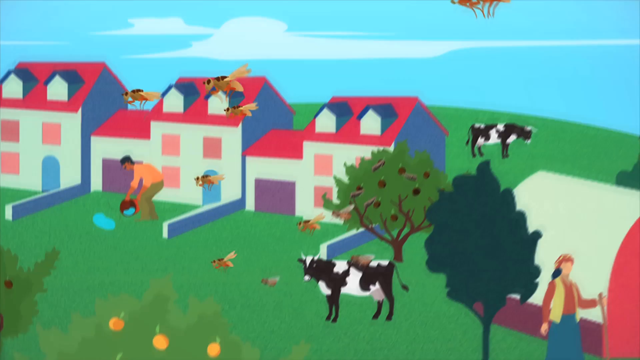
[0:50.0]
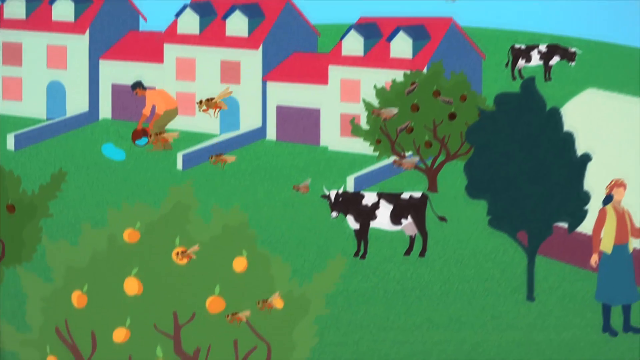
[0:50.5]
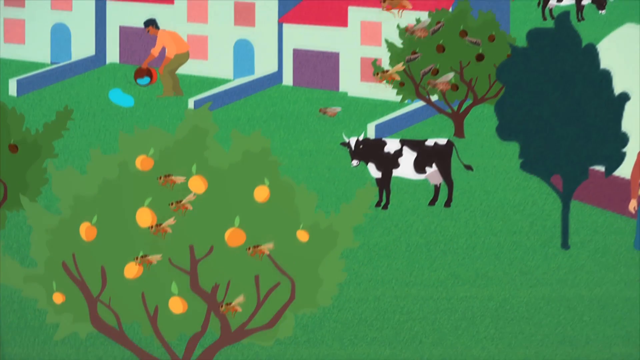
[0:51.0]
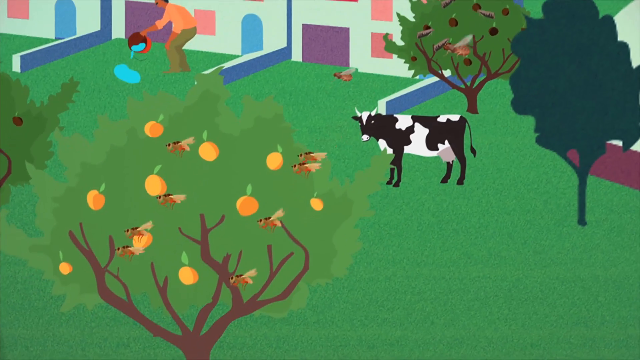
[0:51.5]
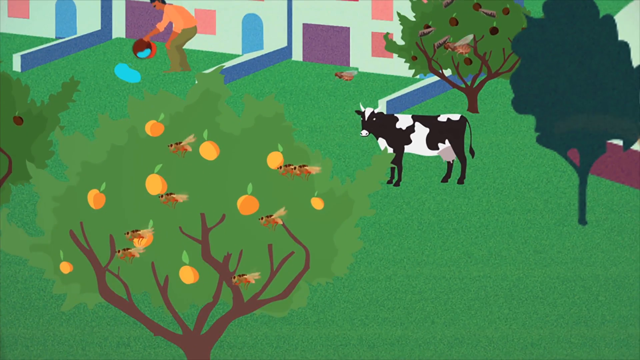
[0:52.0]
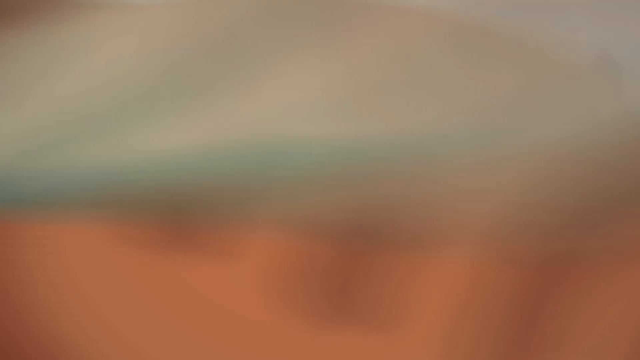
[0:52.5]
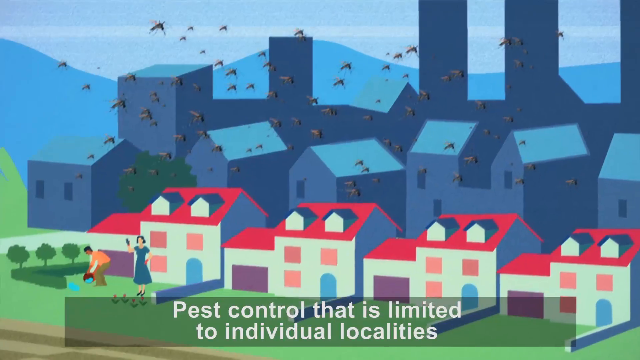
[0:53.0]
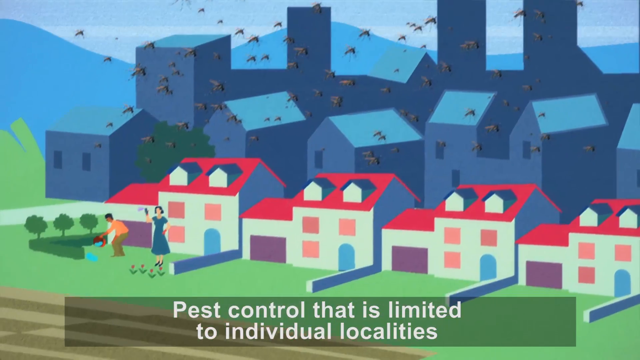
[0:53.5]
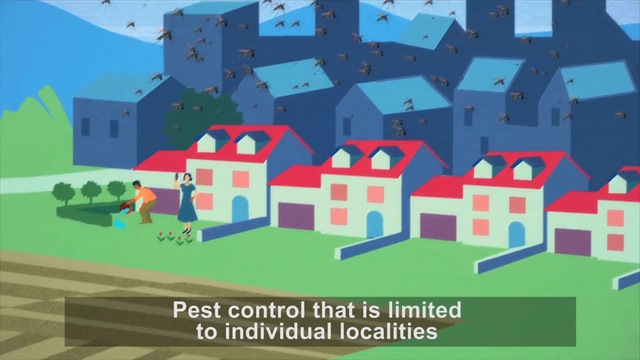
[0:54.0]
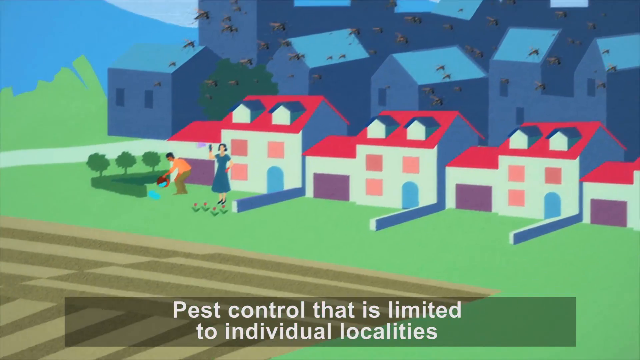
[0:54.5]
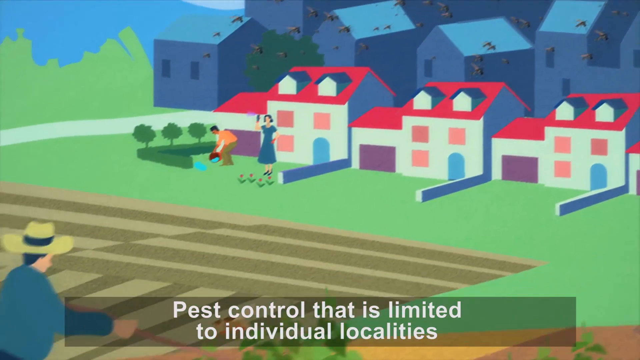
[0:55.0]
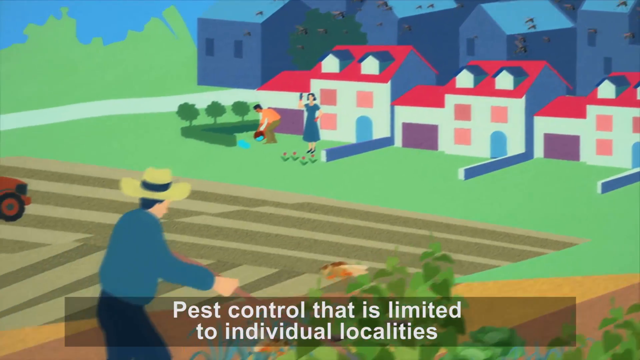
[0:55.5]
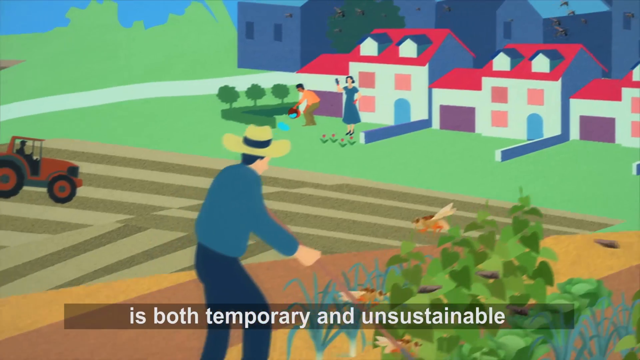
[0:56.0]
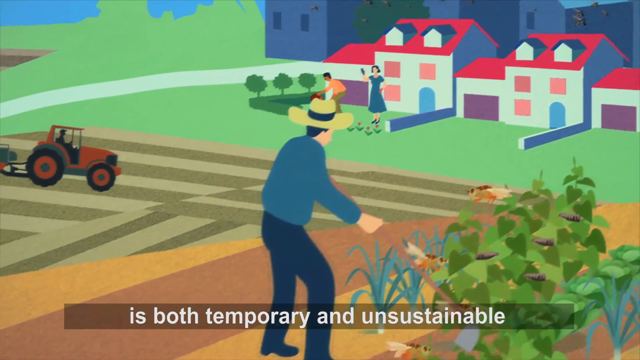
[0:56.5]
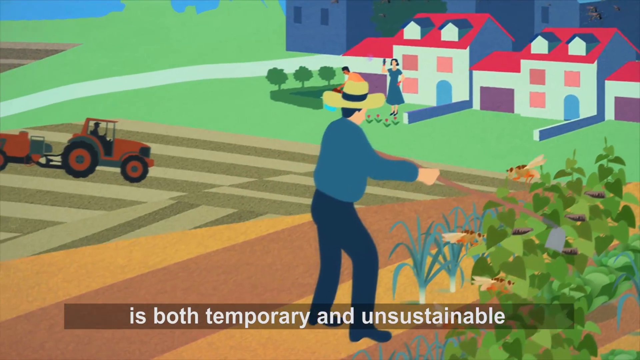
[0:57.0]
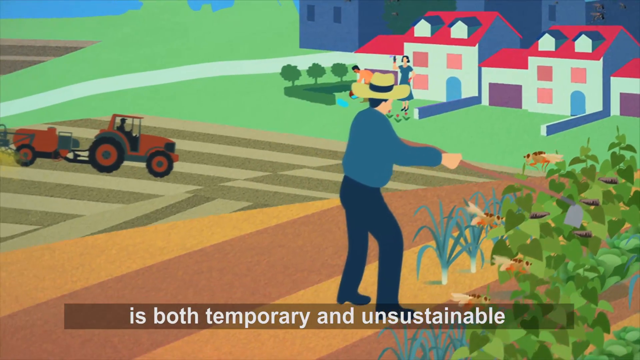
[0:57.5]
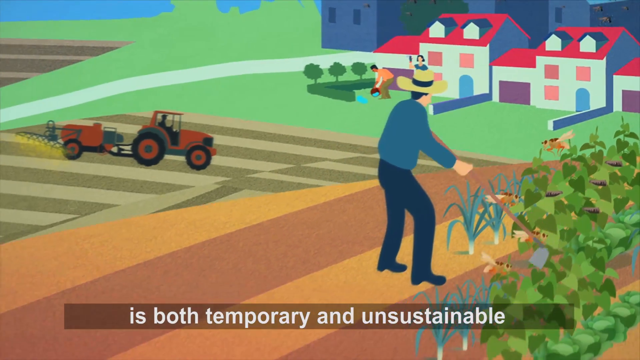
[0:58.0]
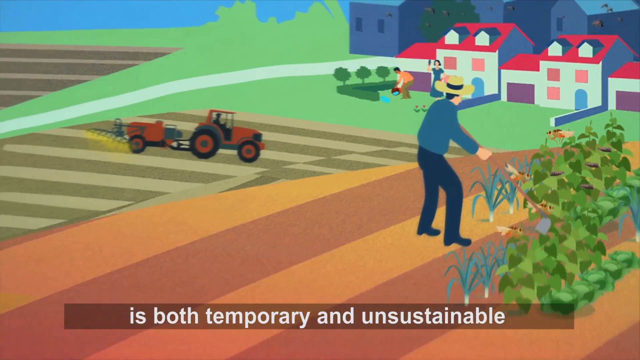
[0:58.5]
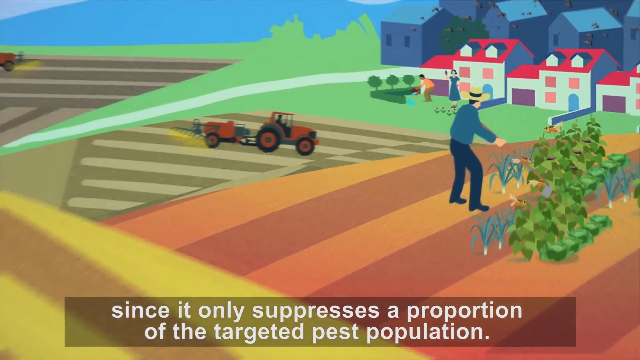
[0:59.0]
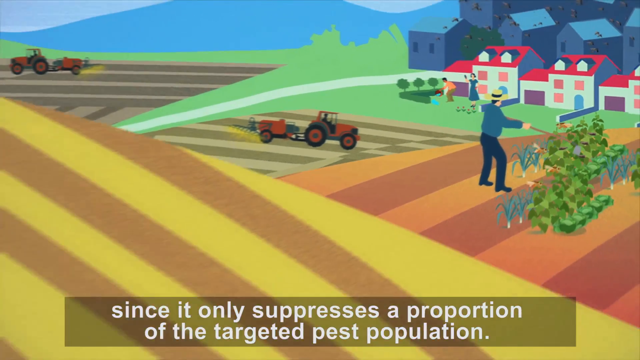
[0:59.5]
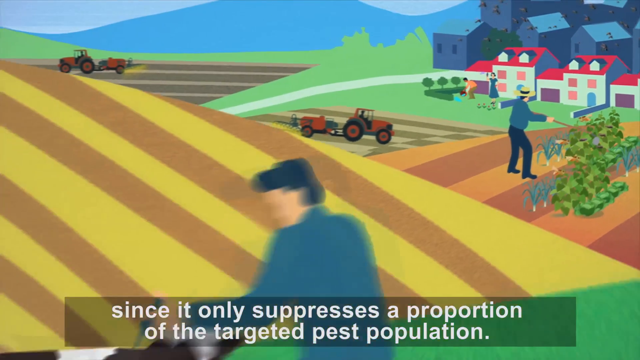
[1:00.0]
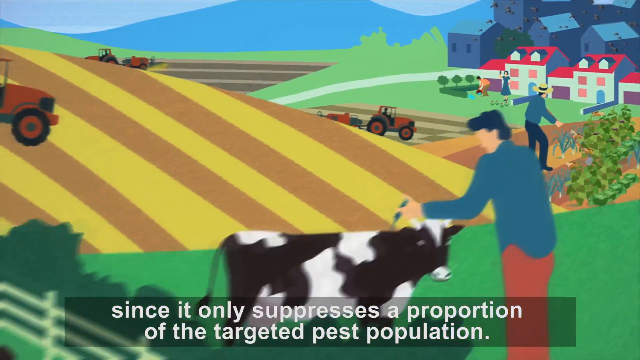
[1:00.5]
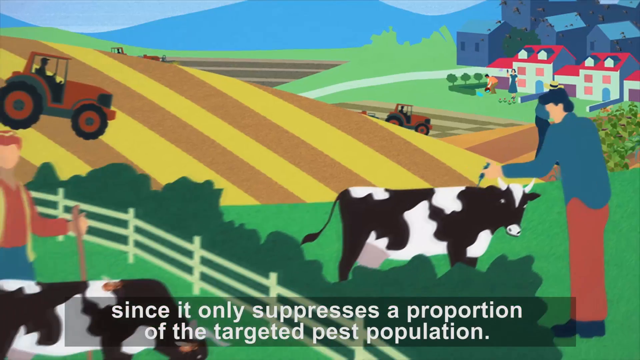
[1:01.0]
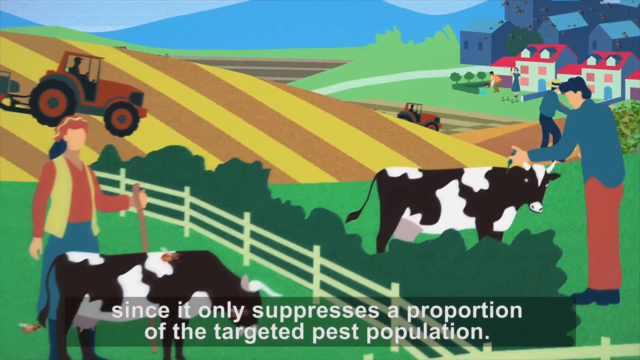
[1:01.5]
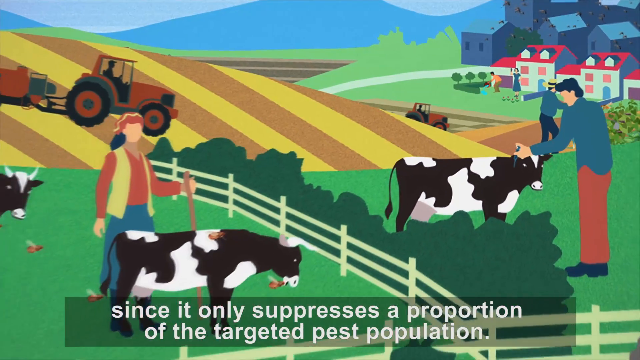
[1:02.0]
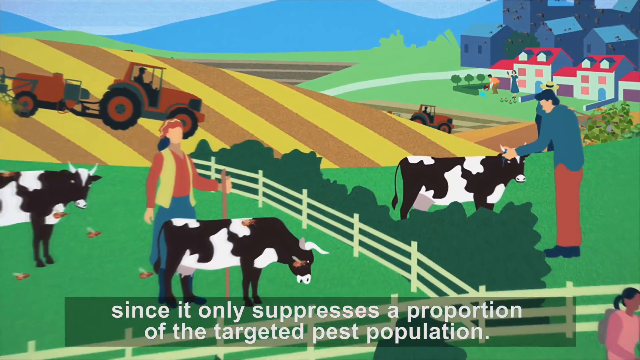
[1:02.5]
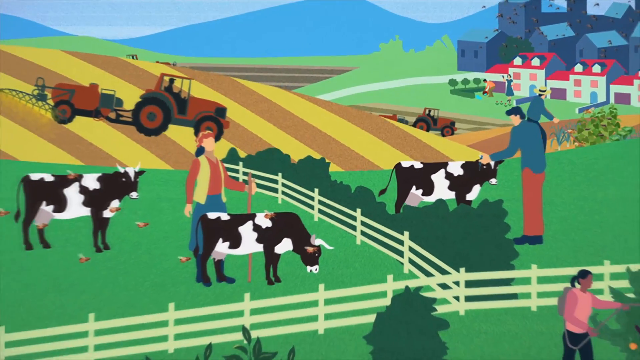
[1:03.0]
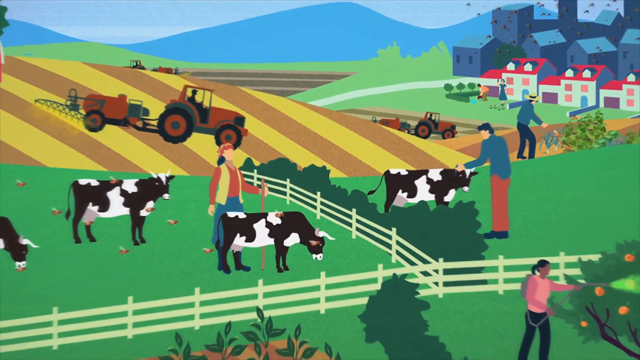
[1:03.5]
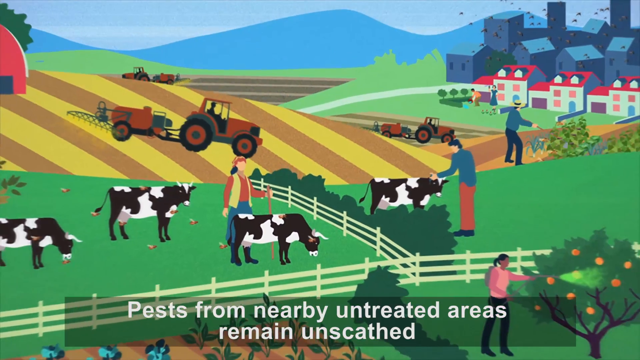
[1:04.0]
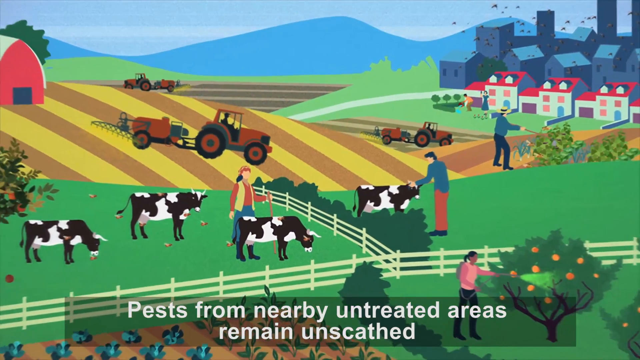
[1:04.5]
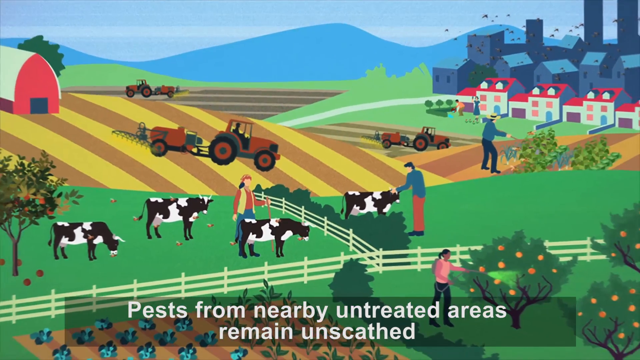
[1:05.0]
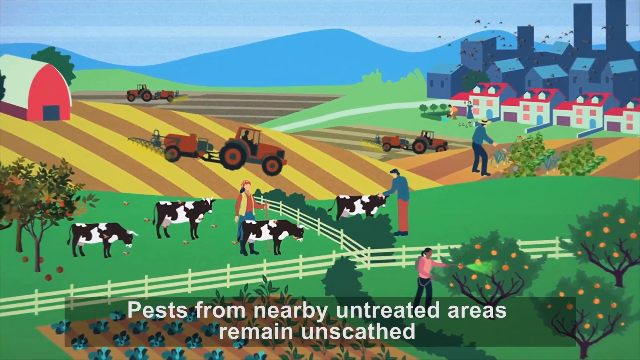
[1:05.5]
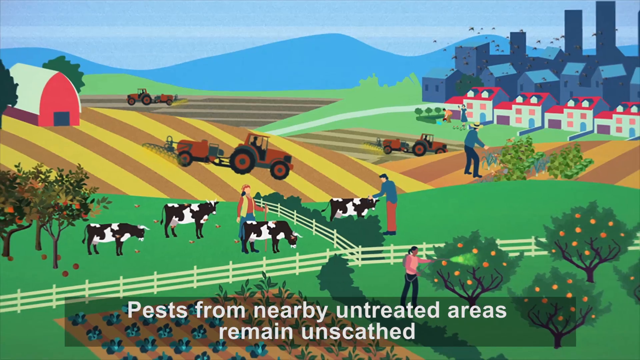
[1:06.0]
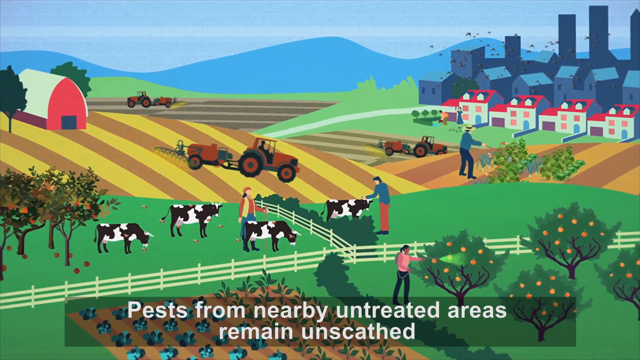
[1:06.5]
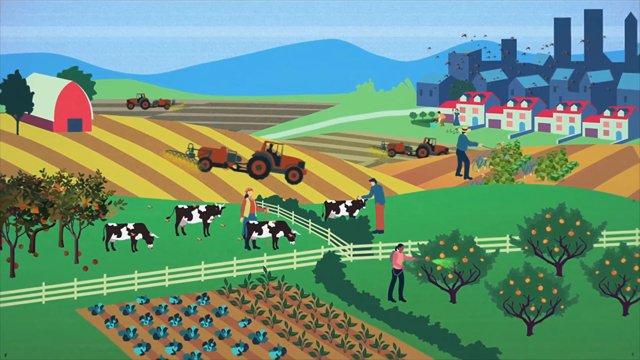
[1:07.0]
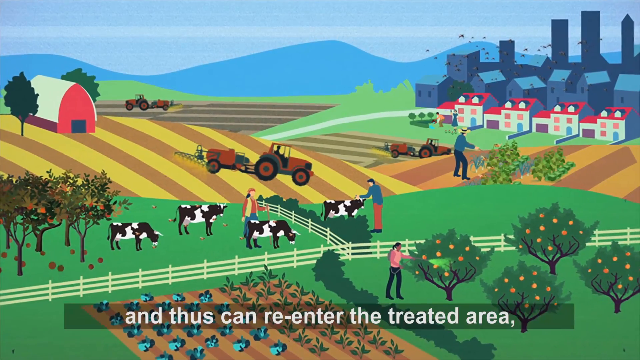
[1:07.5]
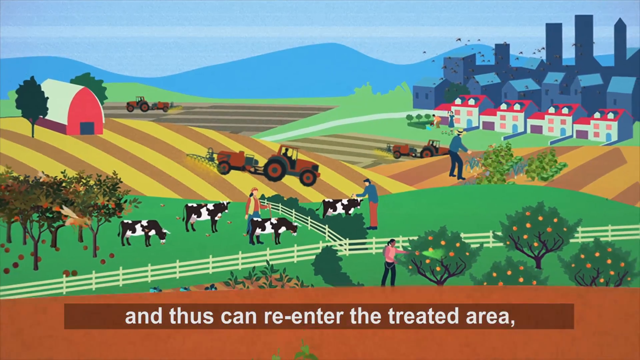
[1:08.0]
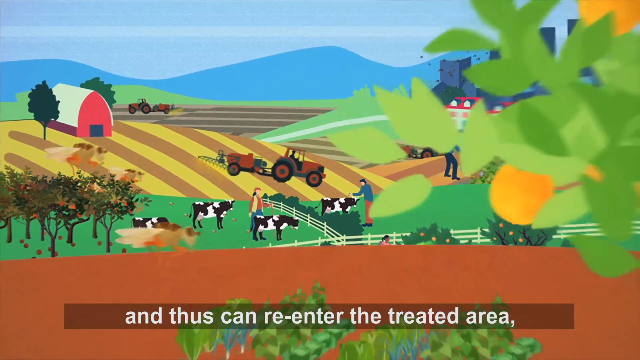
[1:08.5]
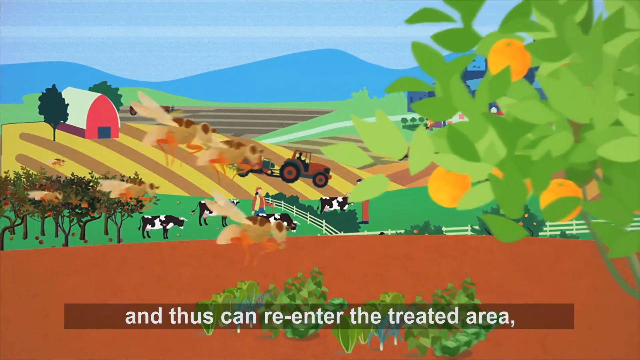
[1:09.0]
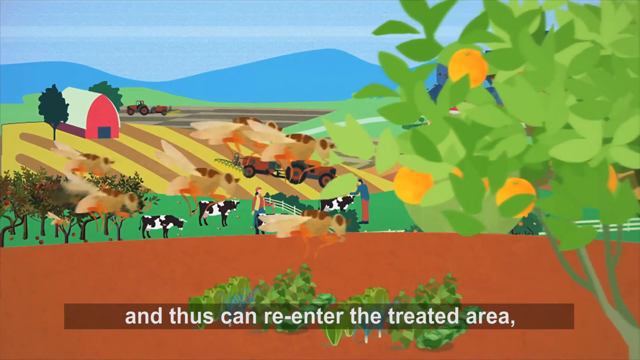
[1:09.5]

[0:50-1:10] Mosquitoes land on the fruit trees. The scene changes to what looks like an industrial, more urban setting with factories, painted very dark, apparently to suggest it is bad and polluting, with a lot of mosquitoes flying around in the sky. In the foreground are houses, and a man and a woman tend their garden, with trees, a little hedge and flowers. Next to them are their neighbours' houses, which are bare, and in front of their house is what looks like farmland, where a farmer in his tractor tends a neatly ploughed field. Another farmer in a blue shirt and a big wide-brimmed hat apparently has a hoe in his hand and is tending his land. As the view pans further away through the urban scene, more farmers plough their fields. A farmer in red trousers and a blue shirt is with a Friesian cow, and a woman, apparently a farmer, wearing a yellow waistcoat and a red shirt has two Friesian cows in her little paddock. Insects that apparently look like bees rather than mosquitoes fly around the farm as well. As the view pans out further, fruit trees are on the left-hand side in the same paddock as the woman with her cows, and in front of that a woman sprays the crops with some sort of insect repellent, possibly pesticide.